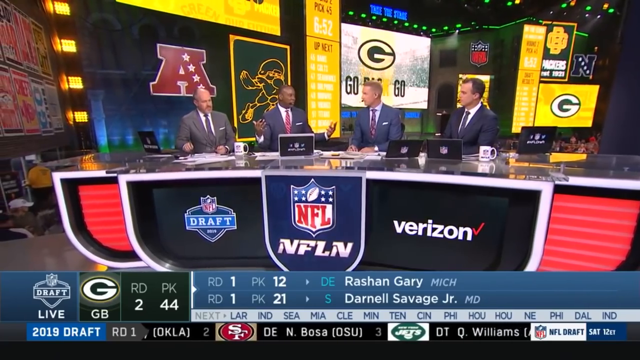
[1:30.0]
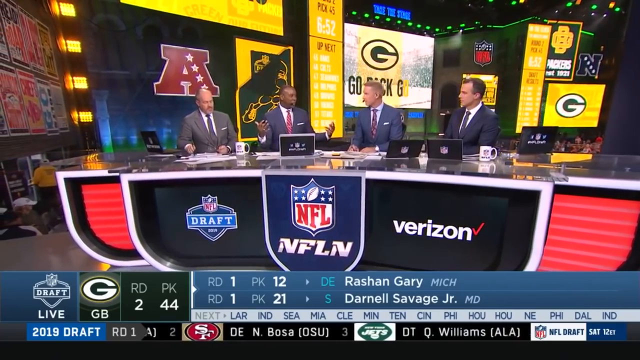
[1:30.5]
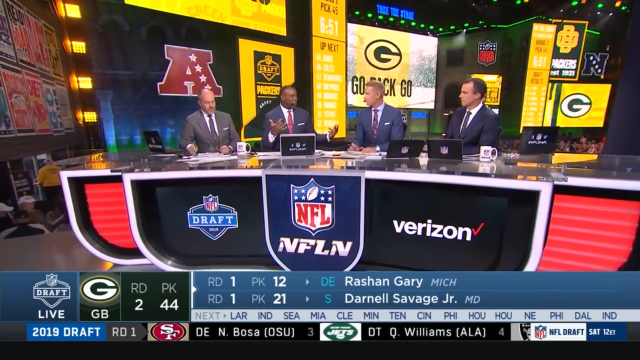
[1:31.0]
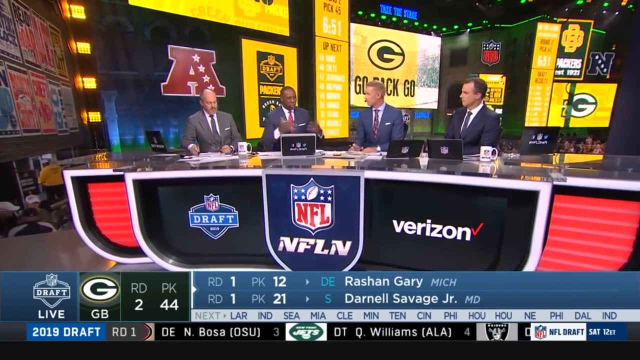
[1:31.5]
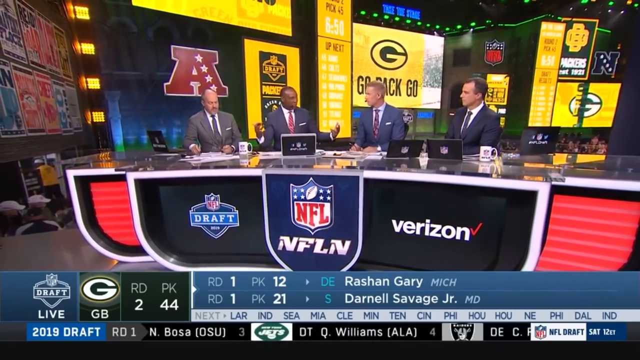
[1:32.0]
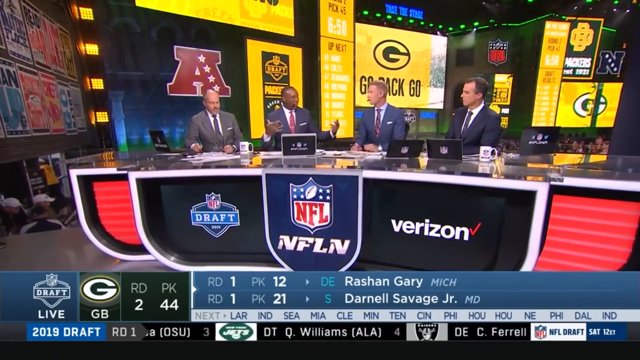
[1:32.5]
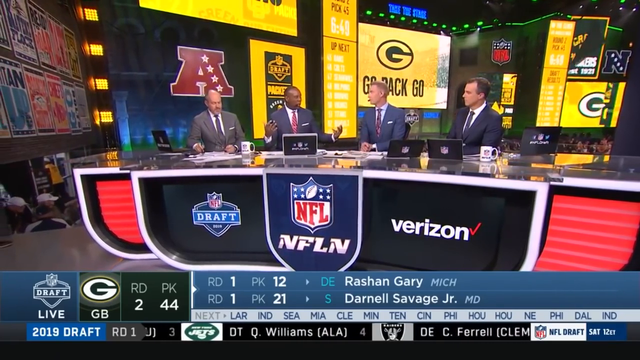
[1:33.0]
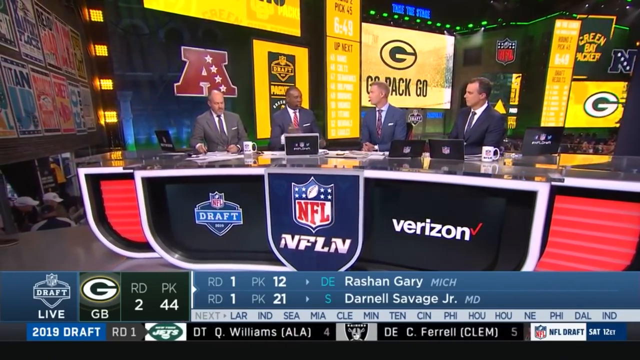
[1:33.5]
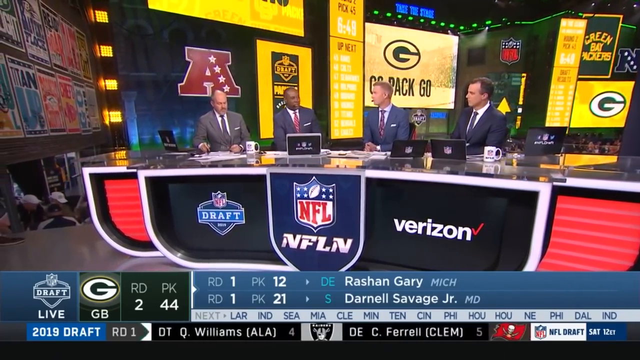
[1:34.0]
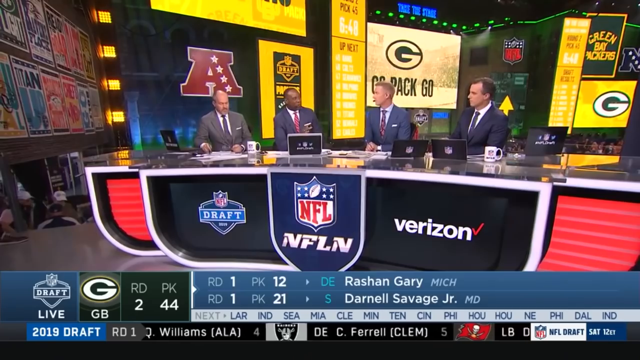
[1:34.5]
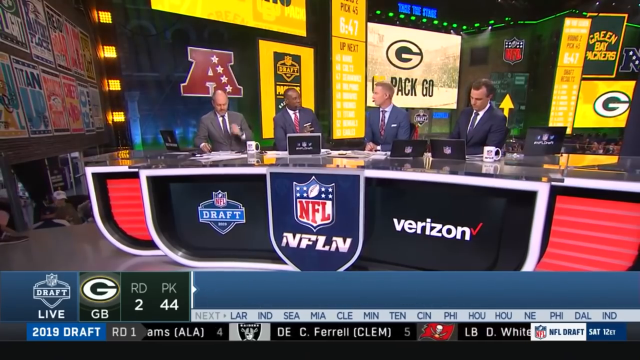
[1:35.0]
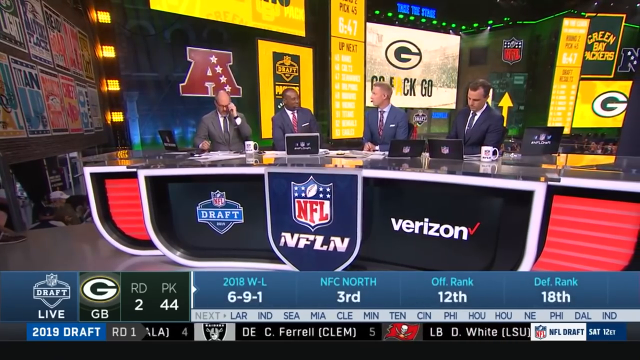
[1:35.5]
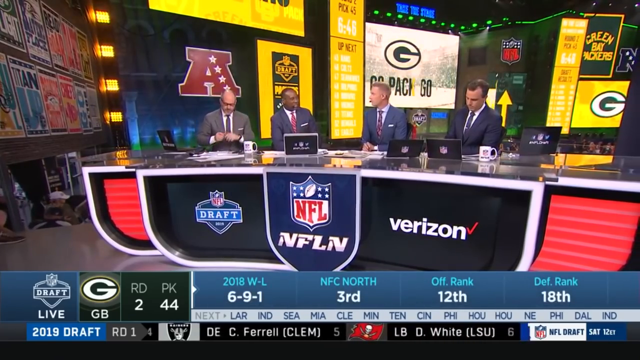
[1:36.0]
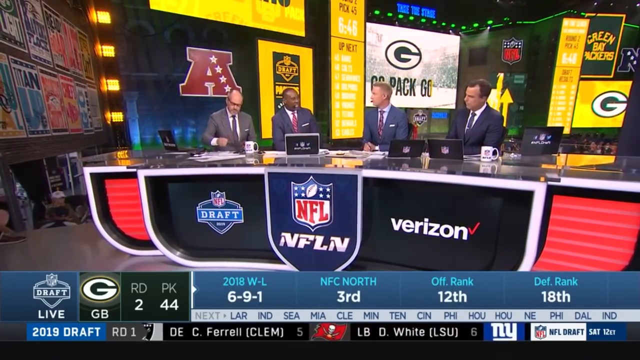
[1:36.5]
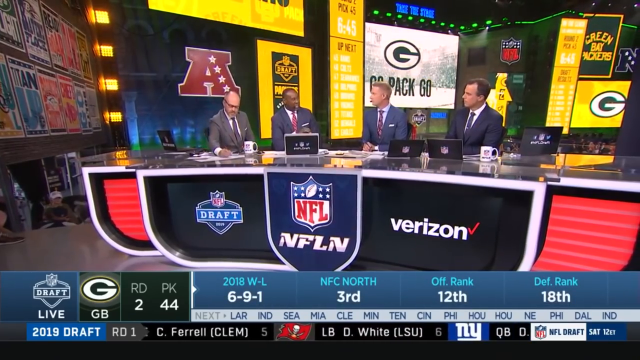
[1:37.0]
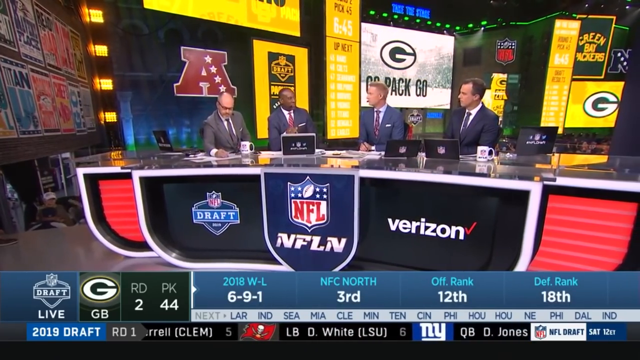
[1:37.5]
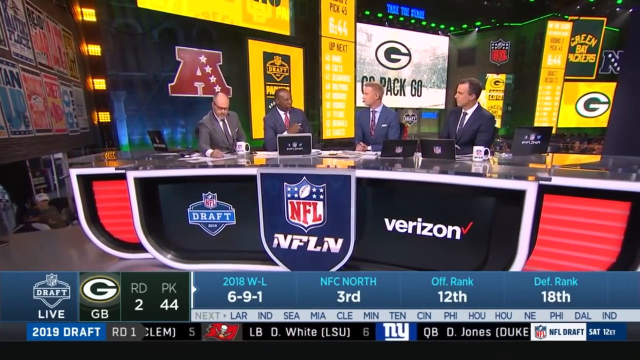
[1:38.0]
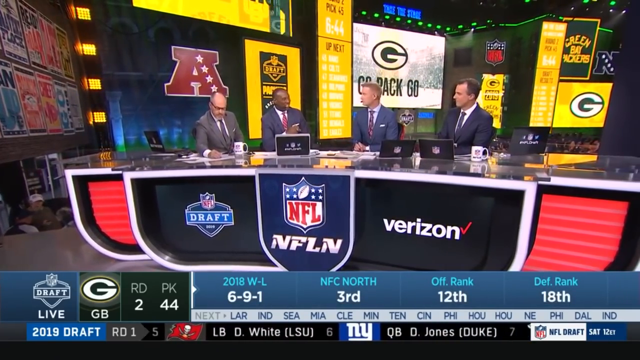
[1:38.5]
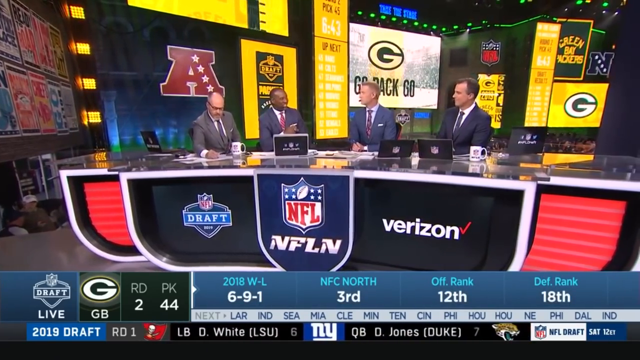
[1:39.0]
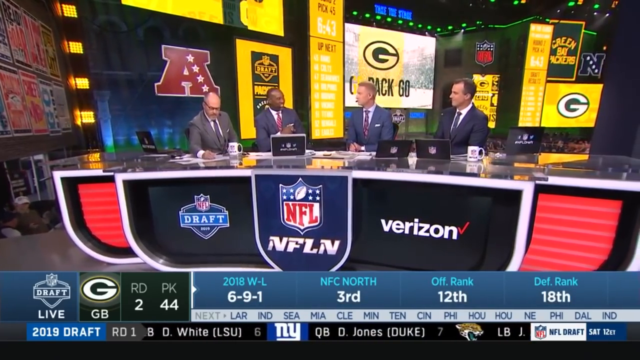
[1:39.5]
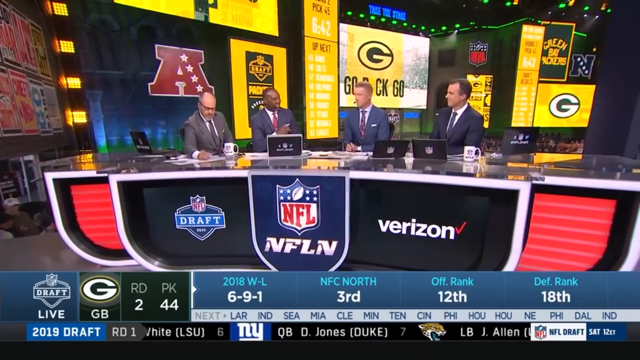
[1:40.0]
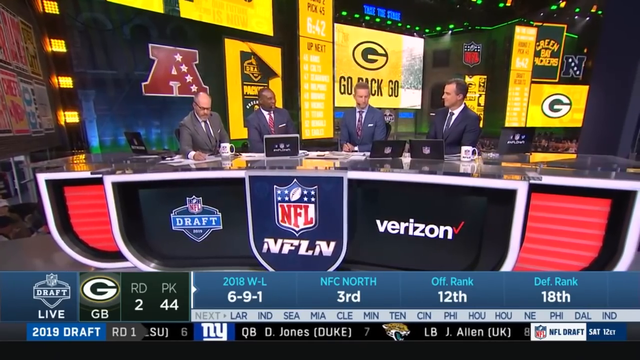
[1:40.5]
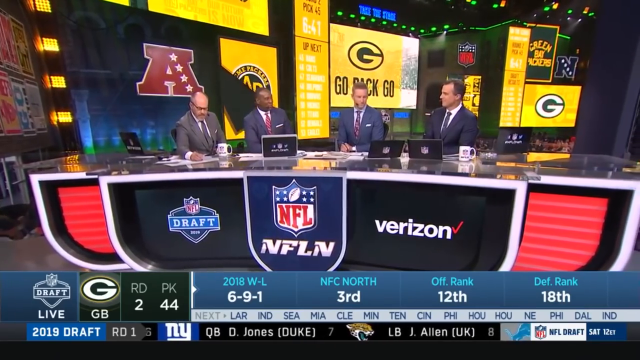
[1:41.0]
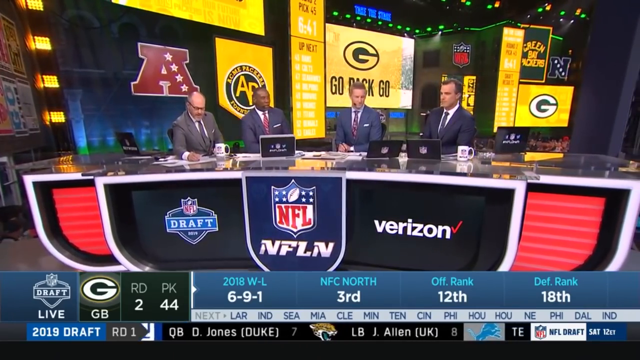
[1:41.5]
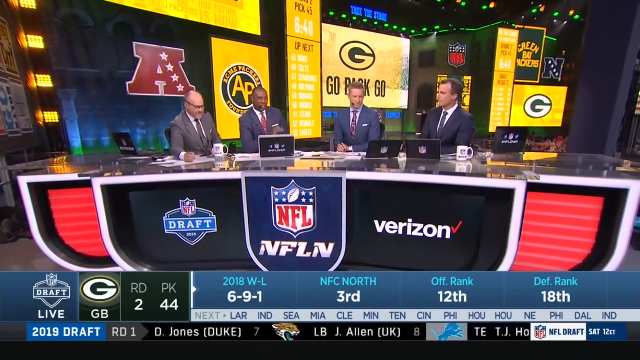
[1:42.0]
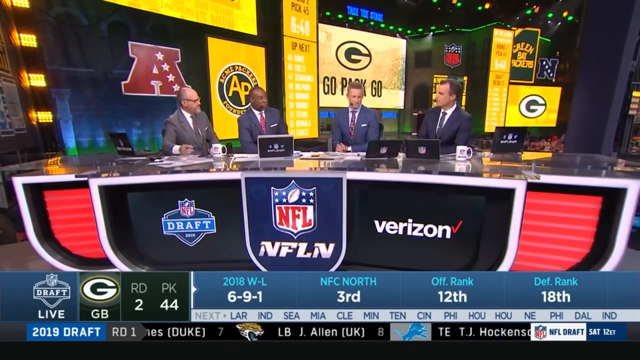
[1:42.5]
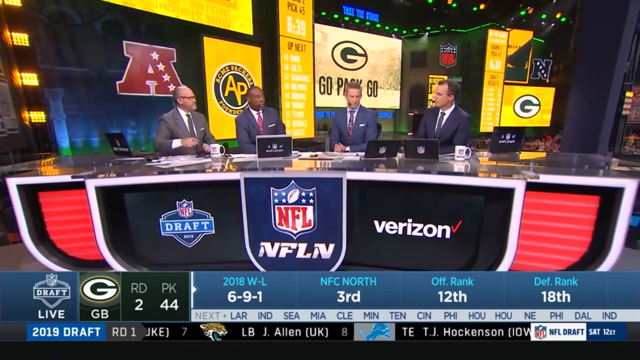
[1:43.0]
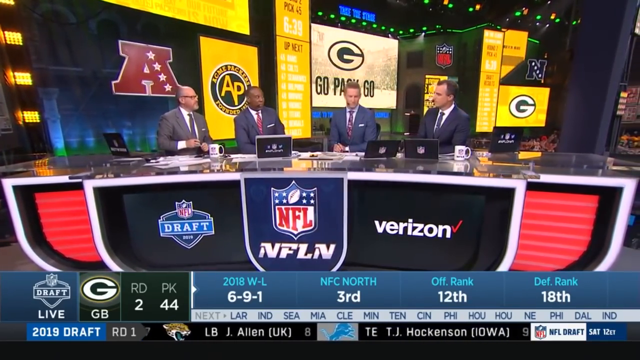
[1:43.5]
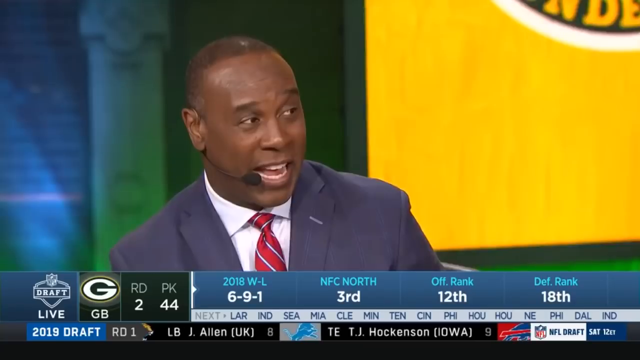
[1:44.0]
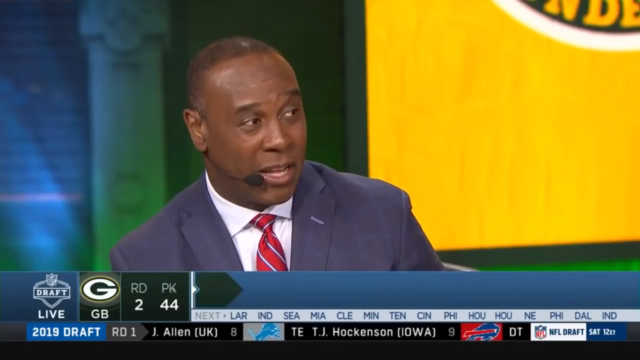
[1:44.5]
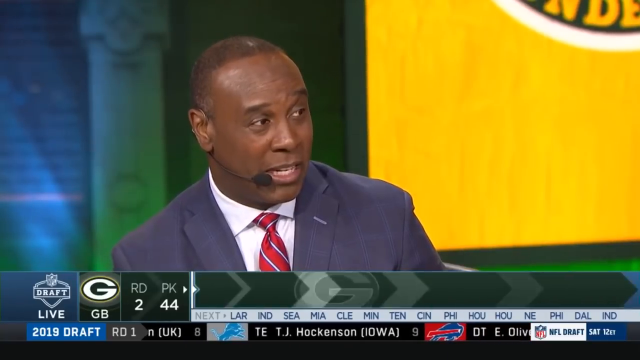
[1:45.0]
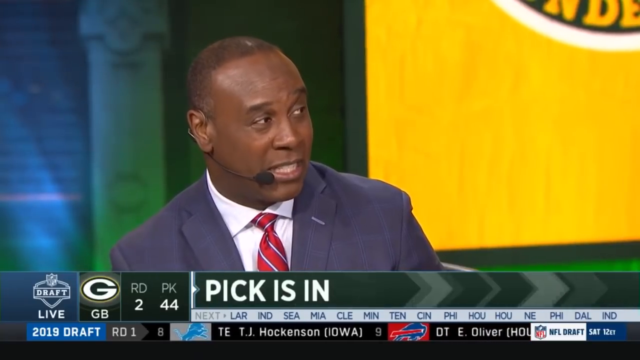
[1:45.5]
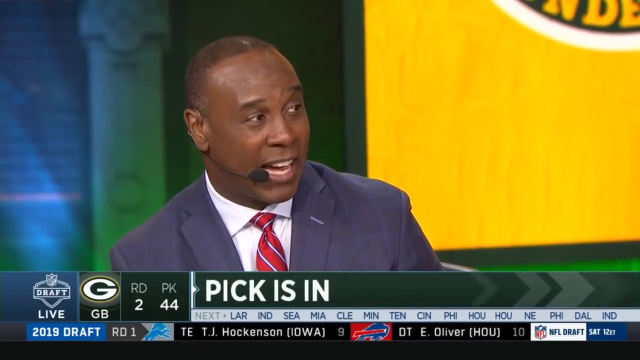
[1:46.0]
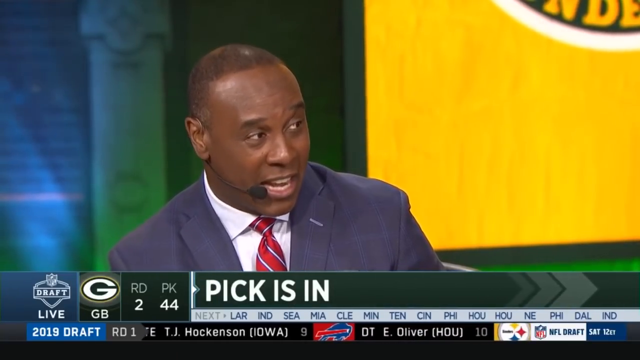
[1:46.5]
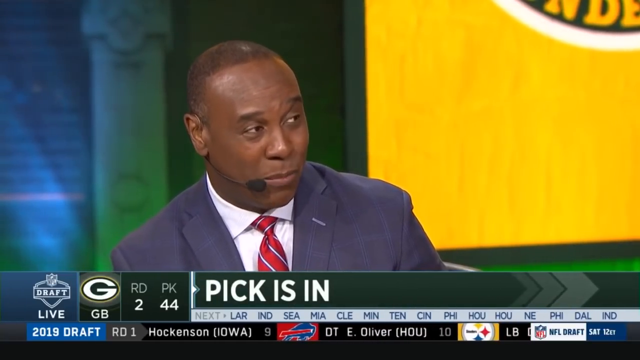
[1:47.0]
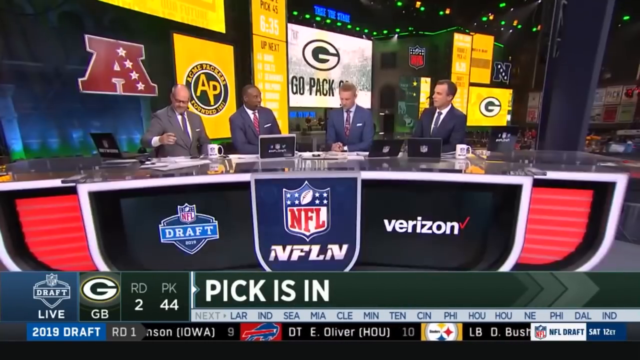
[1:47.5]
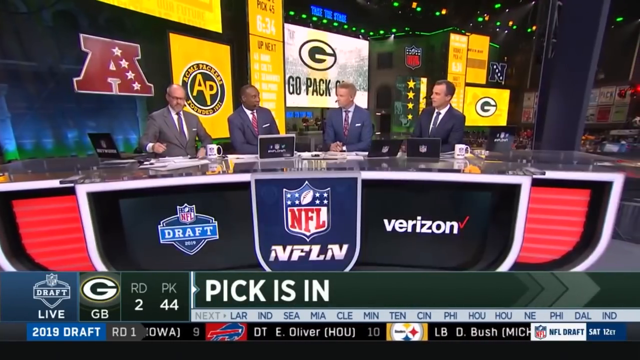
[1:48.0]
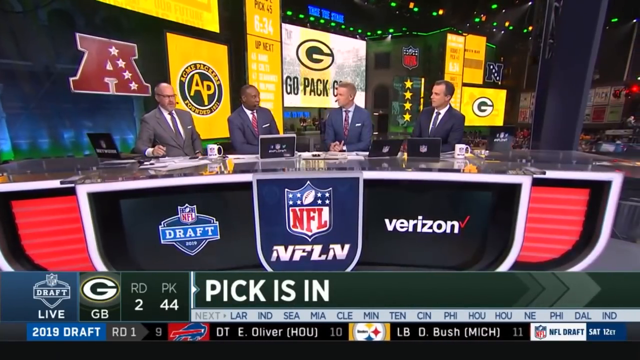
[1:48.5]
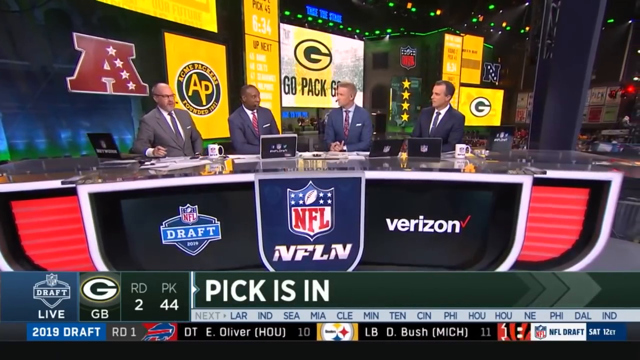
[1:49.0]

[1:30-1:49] At the desk, the same man, second from left, is talking and gesturing with his hands while the camera kind of pans very slowly from left to right, with the same text at the bottom. The camera stops and pans from right to left, and the man on the right-hand side nods at something the man second from left is saying. The camera zooms in on the man talking: a black man with a microphone next to his mouth, wearing a red stripy tie, a white shirt and a black or blue suit. Behind him there is a yellow background to his right and a kind of green background to his left. The graphic at the bottom turns green with white text saying "pick is in". It cuts back to the whole desk and he continues to talk.